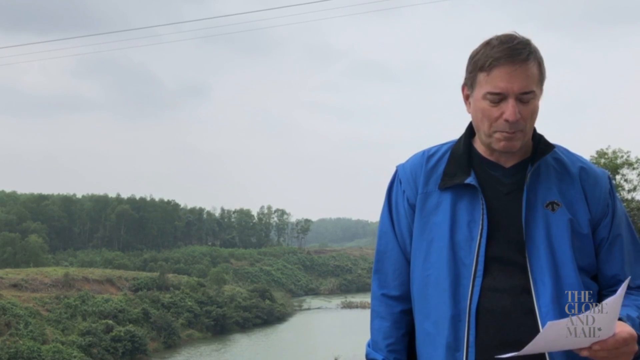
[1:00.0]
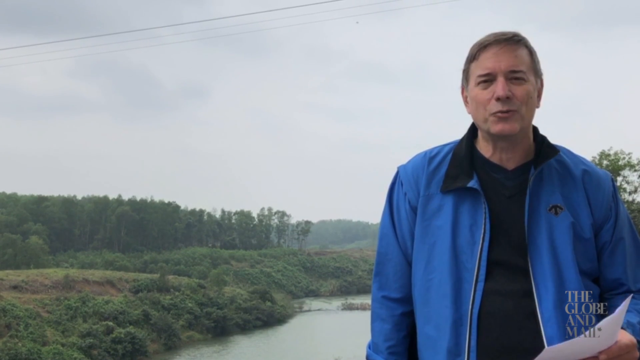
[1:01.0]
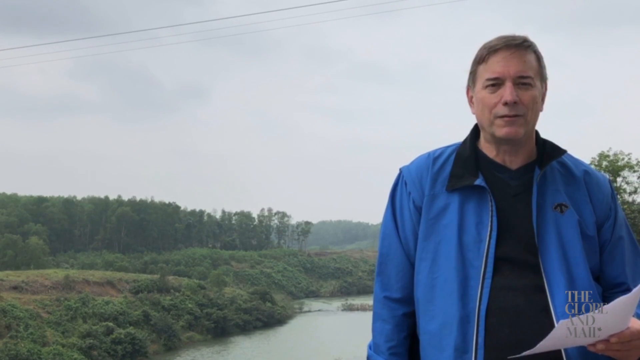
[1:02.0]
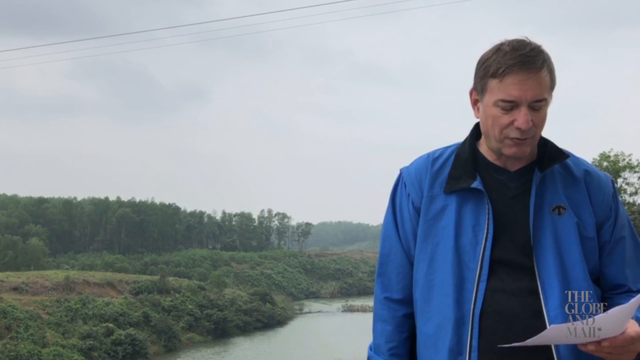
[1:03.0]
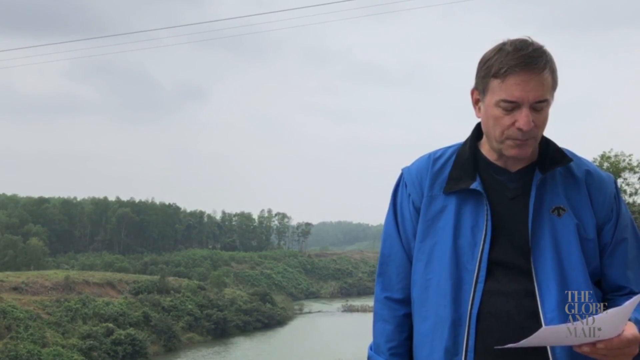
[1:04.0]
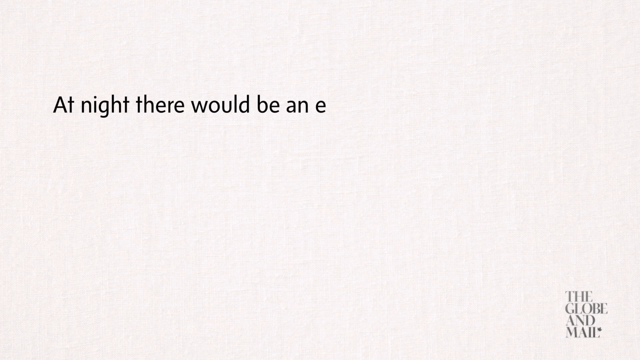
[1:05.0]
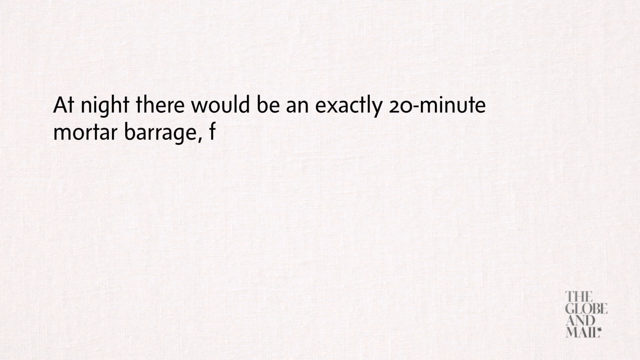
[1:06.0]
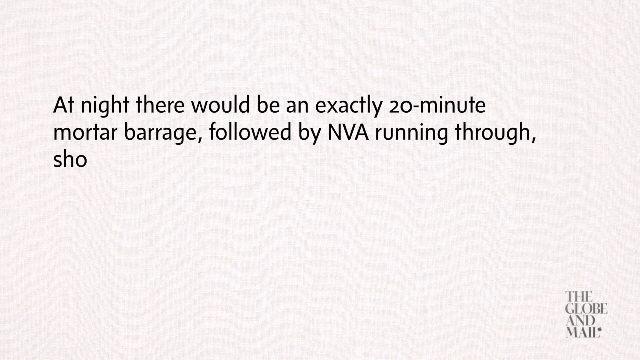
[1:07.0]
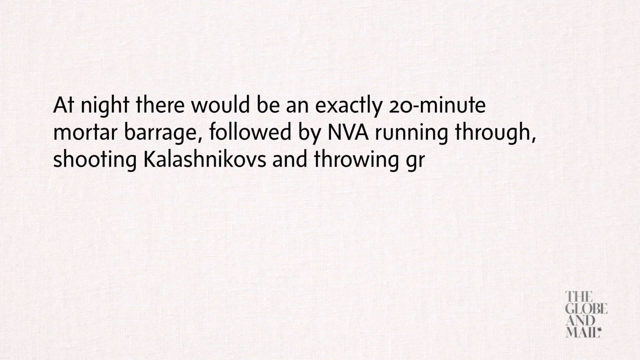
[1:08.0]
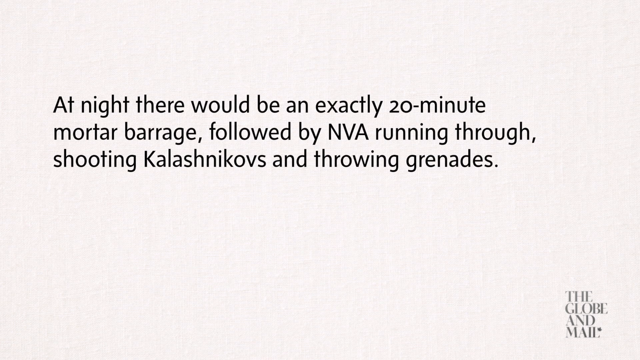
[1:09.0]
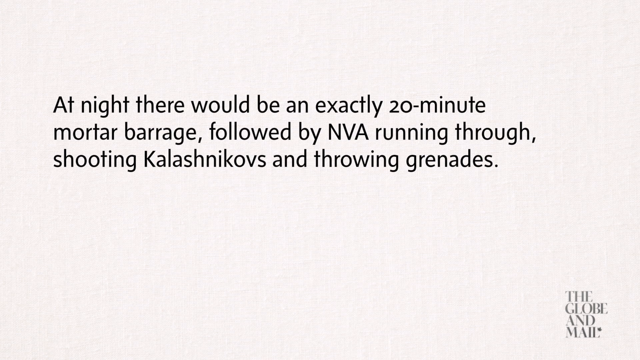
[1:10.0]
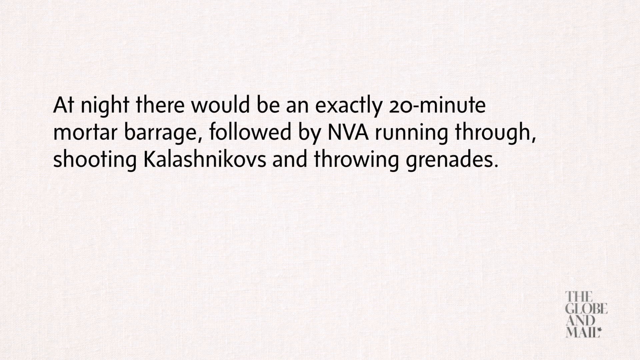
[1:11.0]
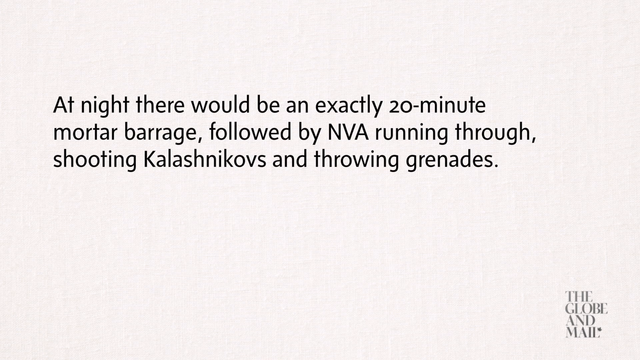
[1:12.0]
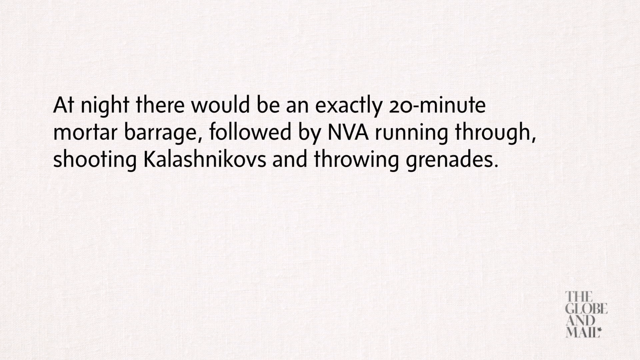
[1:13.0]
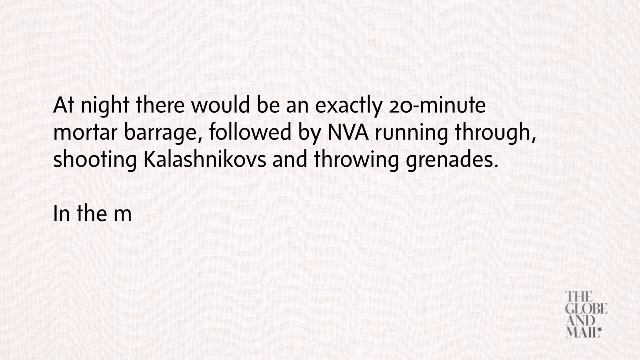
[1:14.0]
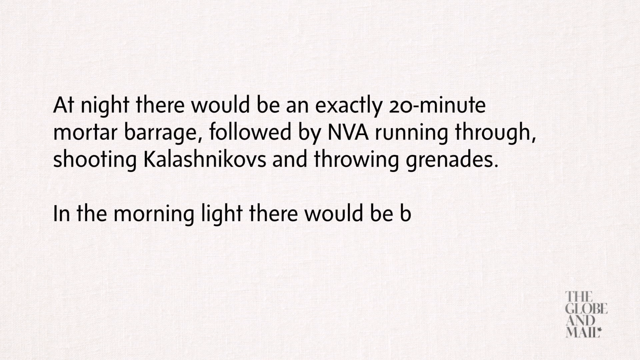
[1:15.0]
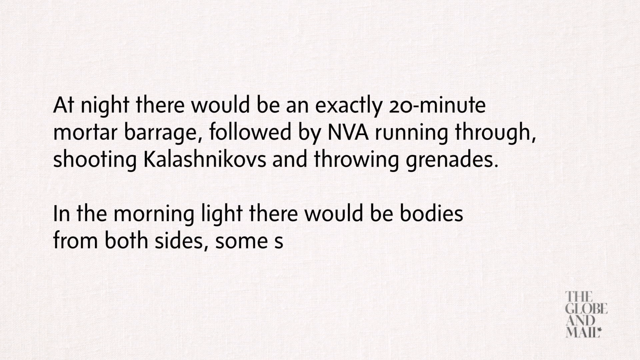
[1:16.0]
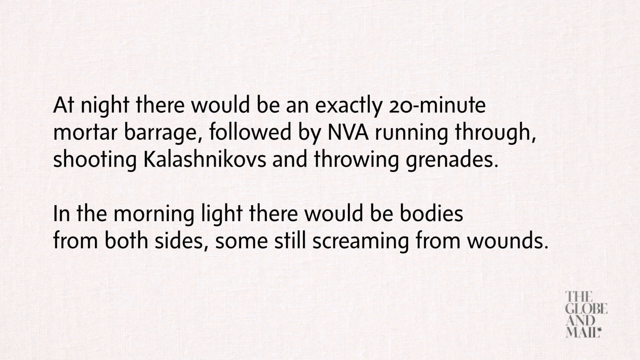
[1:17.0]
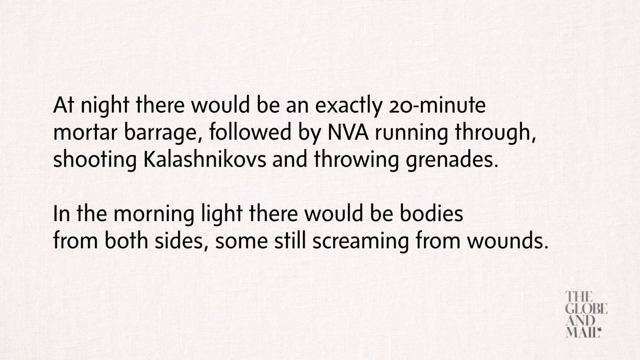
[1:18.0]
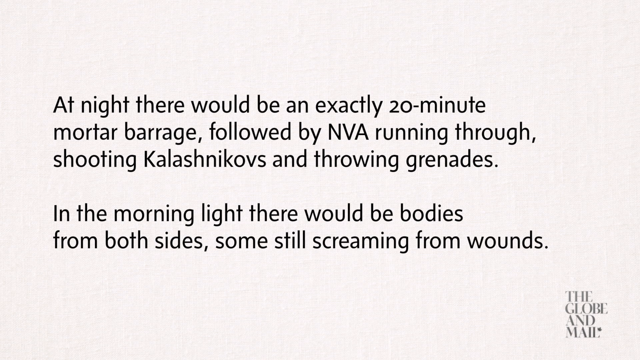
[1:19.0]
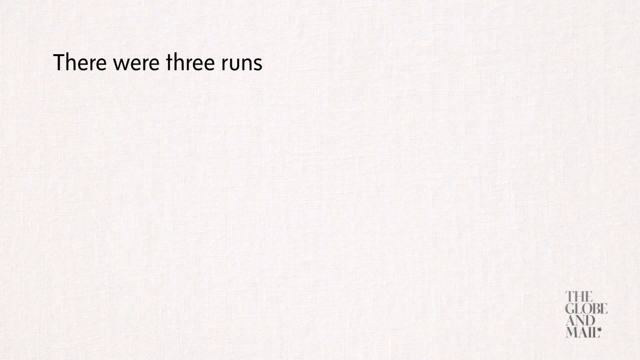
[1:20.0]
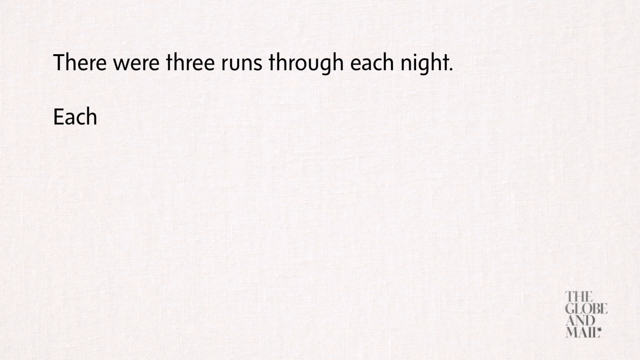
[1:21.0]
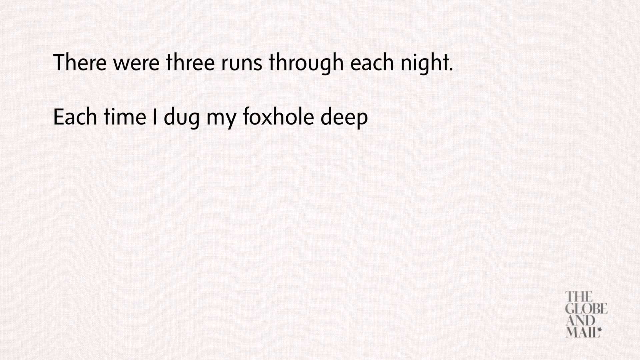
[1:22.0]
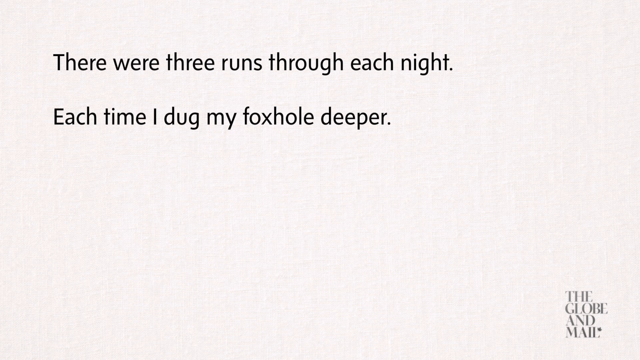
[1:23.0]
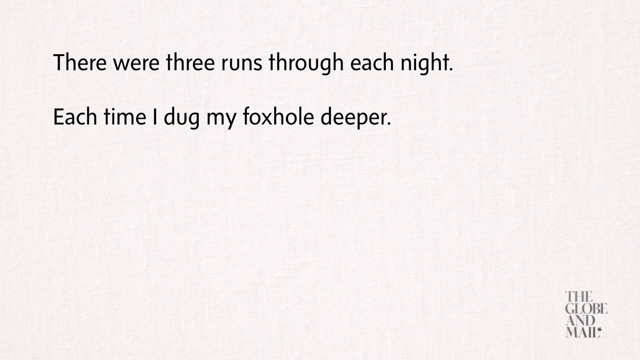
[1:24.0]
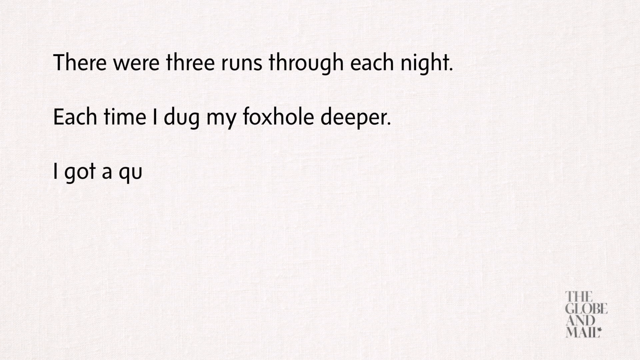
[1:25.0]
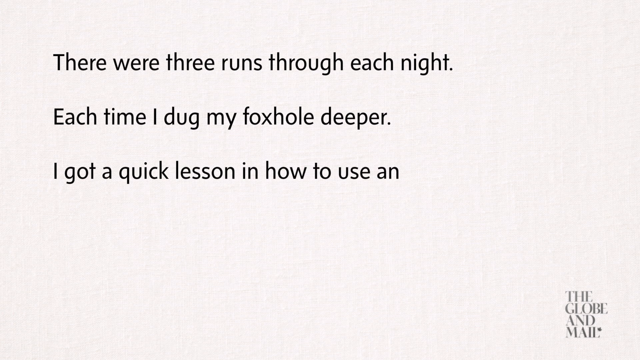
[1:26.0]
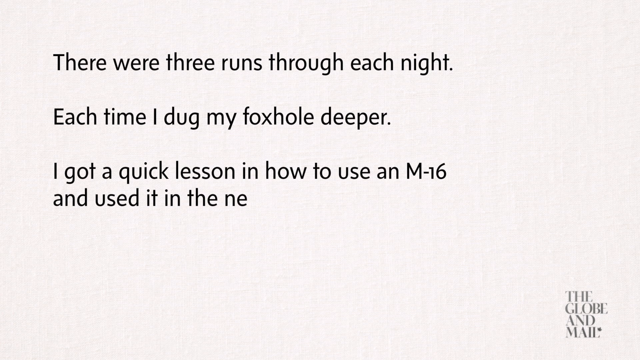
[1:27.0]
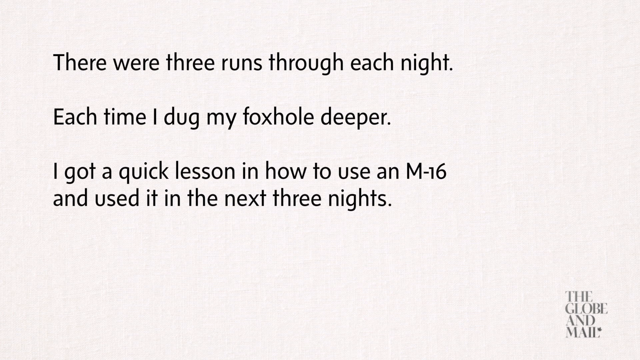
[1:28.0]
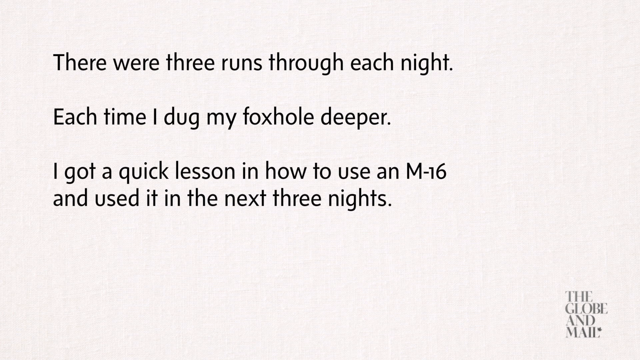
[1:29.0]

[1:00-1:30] The man continues talking to camera and reads from the white sheets in his left hand. The video then cuts to a pale cream background with black text appearing as if being typed as the words are said: "at night there would be an exactly 20 minute mortar barrage followed by NVA running through, shooting Kalashnikovs and throwing grenades. In the morning light, there would be bodies from both sides, some still screaming from wounds." A clear page follows and text appears again: "there were three runs through each night, each time I dug my foxhole deeper. I got a quick lesson in how to use an M16 and used it in the next three nights. It was chaos."